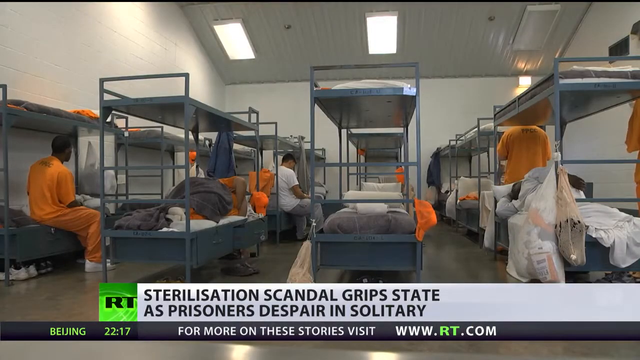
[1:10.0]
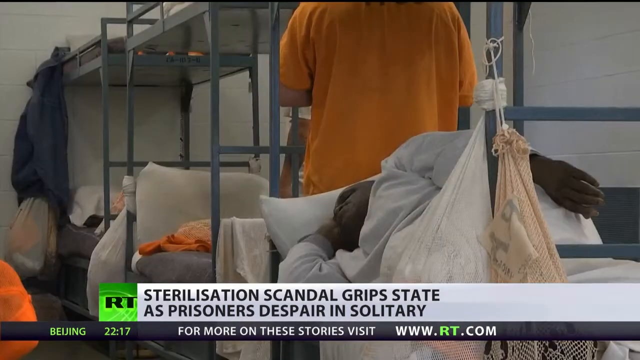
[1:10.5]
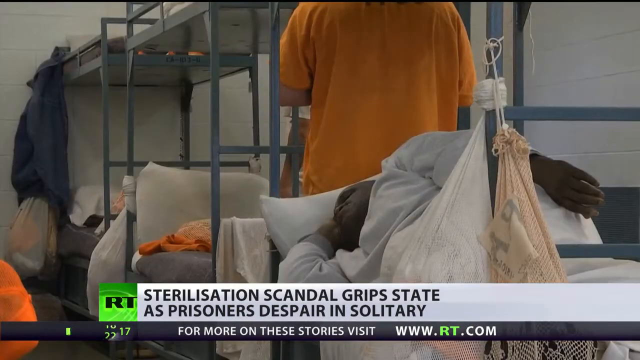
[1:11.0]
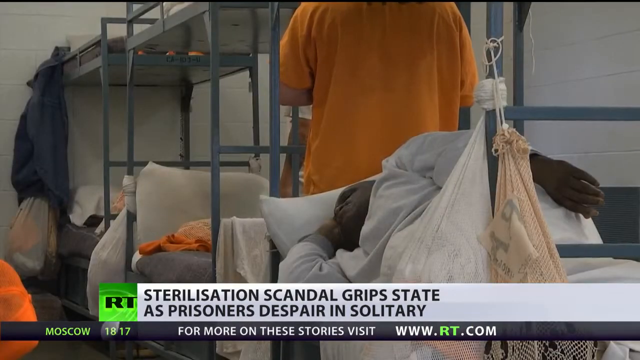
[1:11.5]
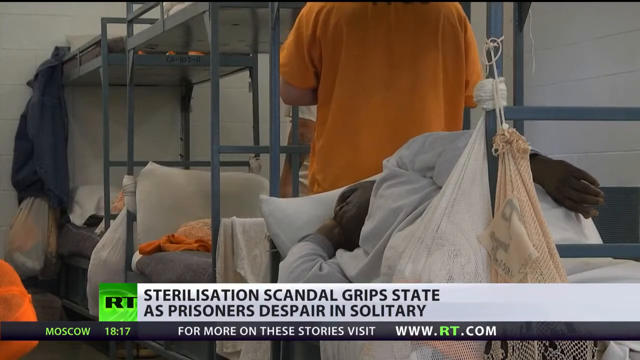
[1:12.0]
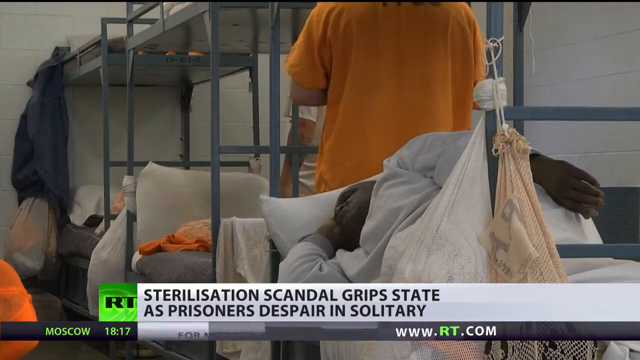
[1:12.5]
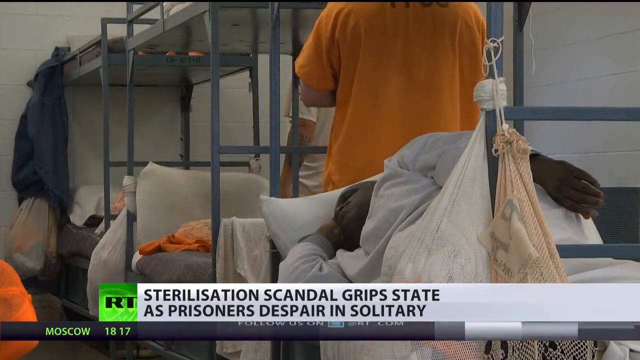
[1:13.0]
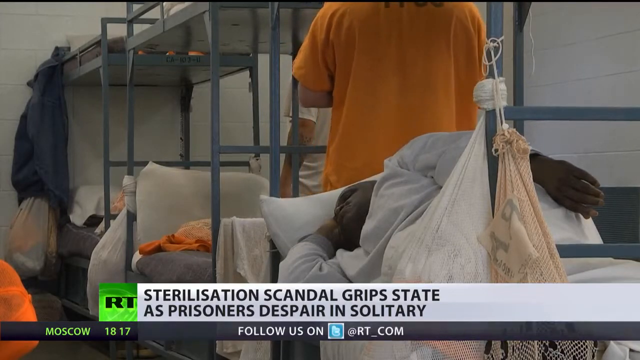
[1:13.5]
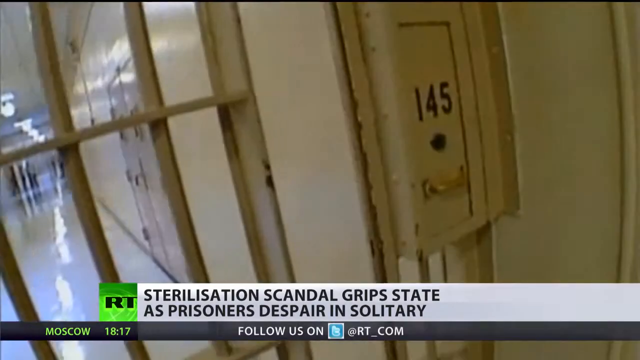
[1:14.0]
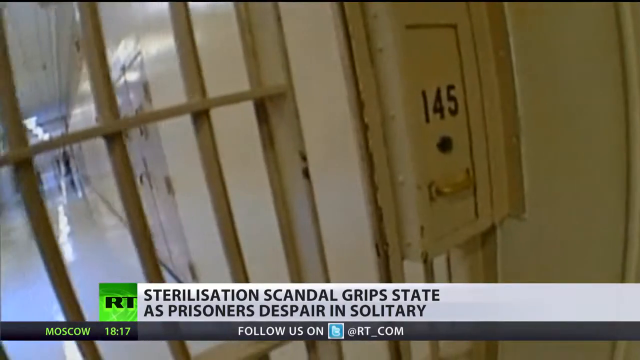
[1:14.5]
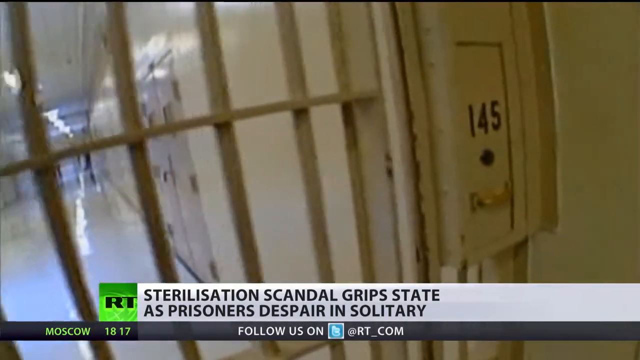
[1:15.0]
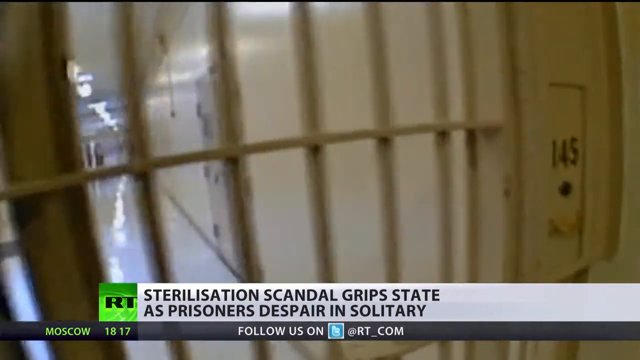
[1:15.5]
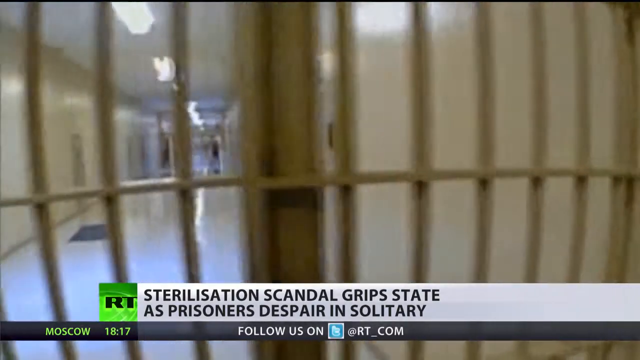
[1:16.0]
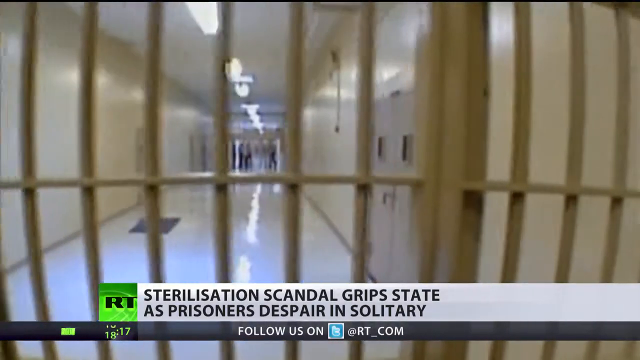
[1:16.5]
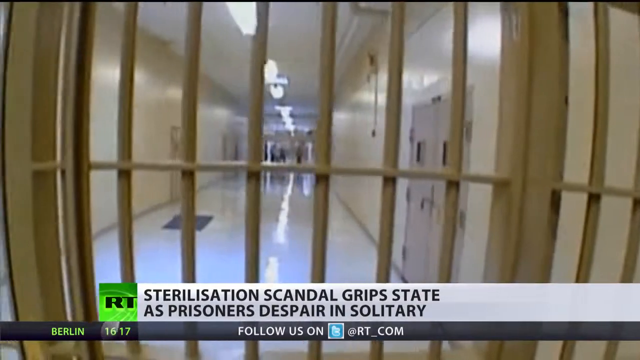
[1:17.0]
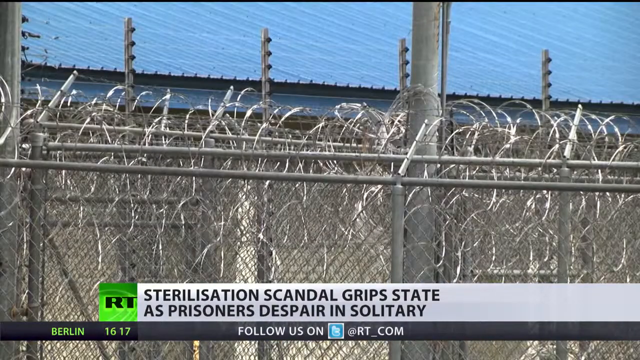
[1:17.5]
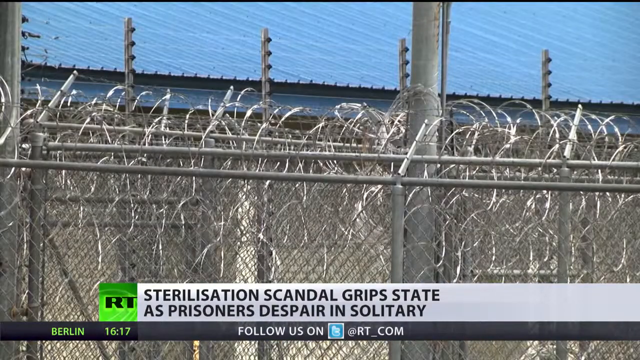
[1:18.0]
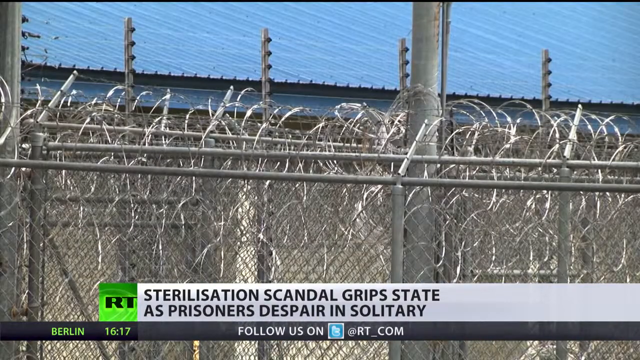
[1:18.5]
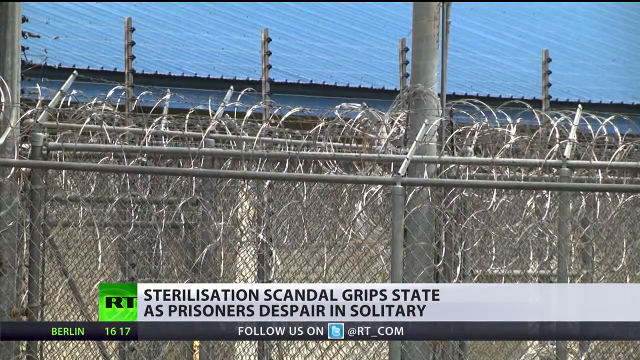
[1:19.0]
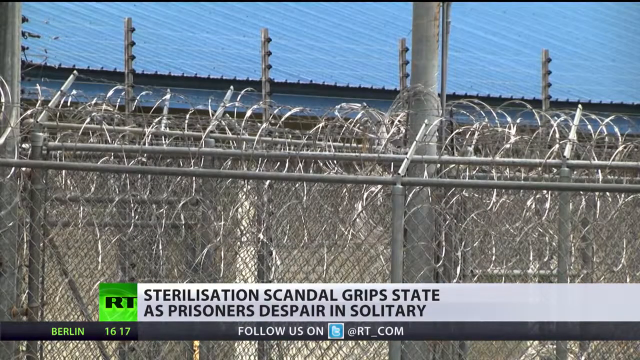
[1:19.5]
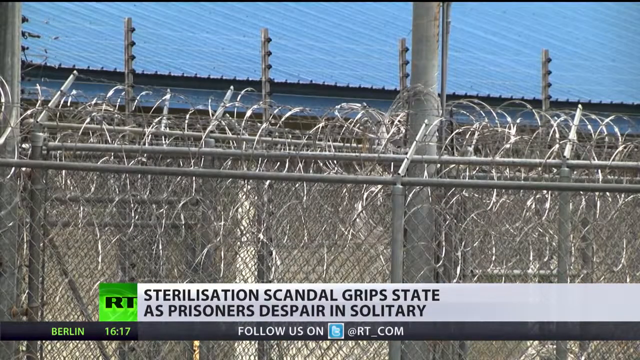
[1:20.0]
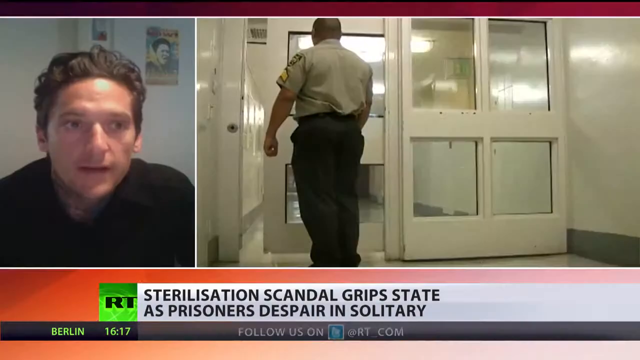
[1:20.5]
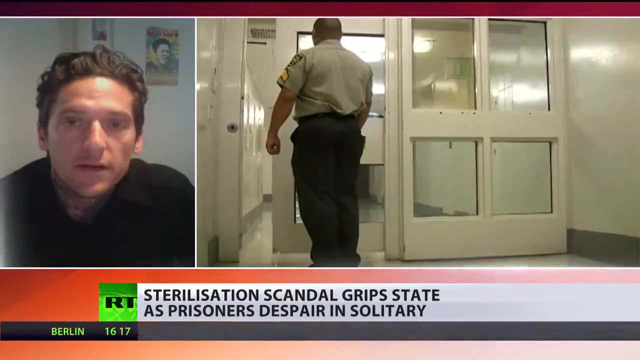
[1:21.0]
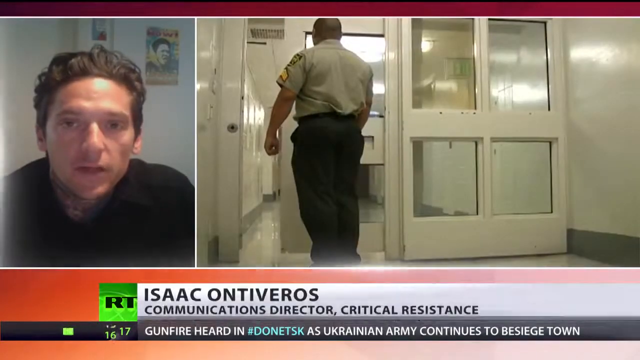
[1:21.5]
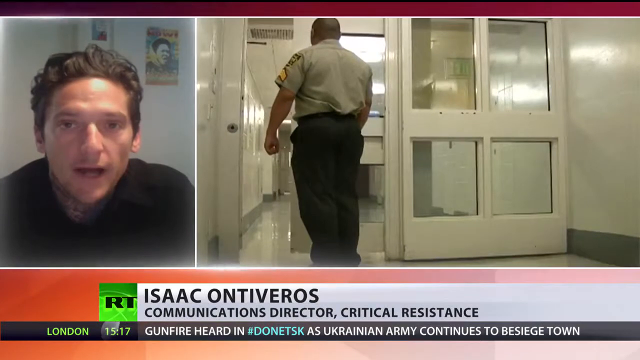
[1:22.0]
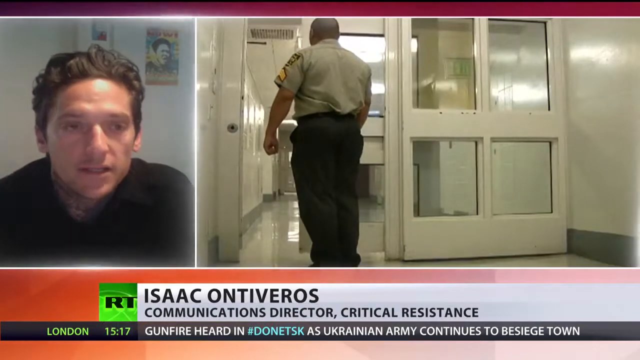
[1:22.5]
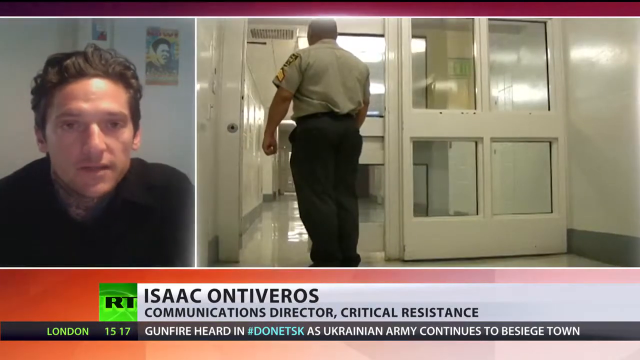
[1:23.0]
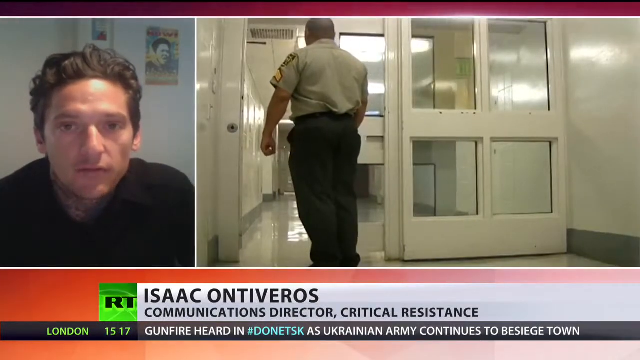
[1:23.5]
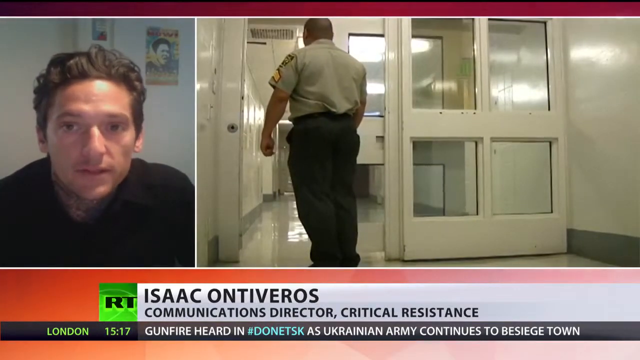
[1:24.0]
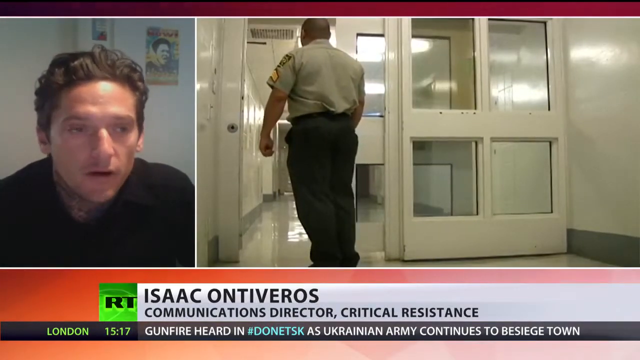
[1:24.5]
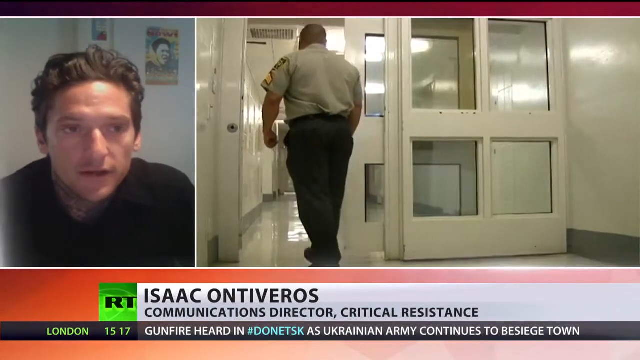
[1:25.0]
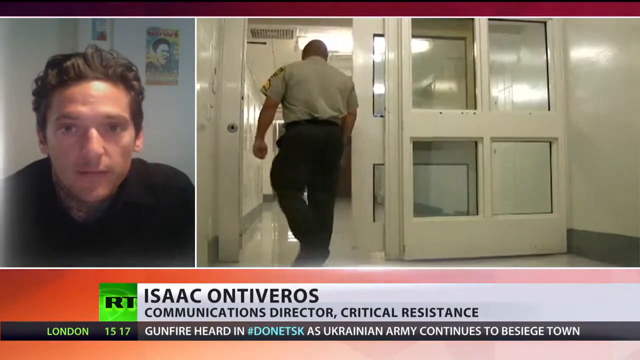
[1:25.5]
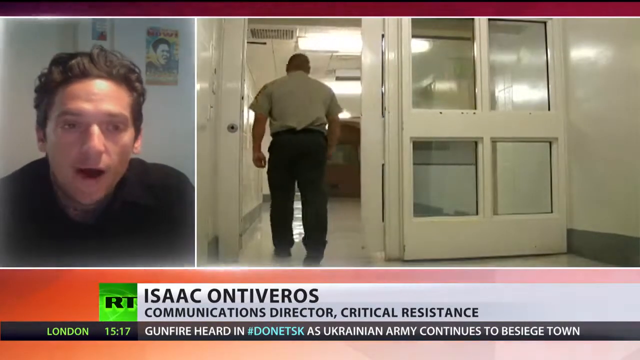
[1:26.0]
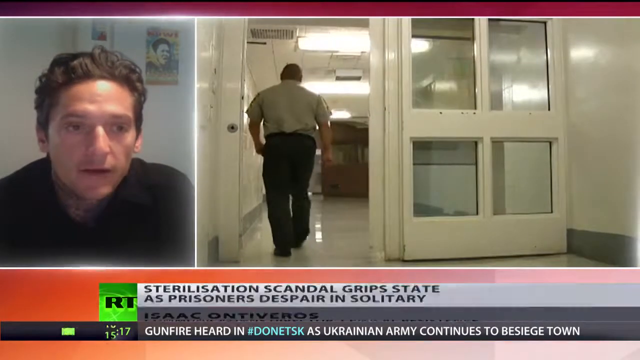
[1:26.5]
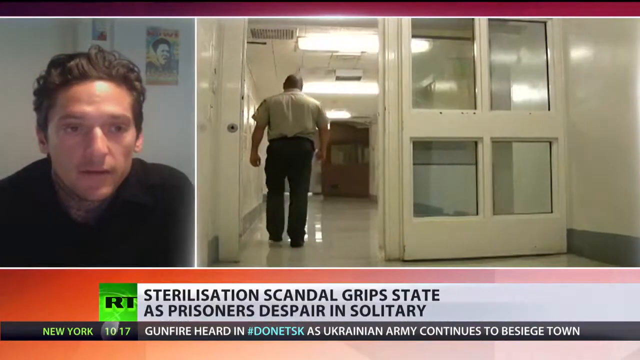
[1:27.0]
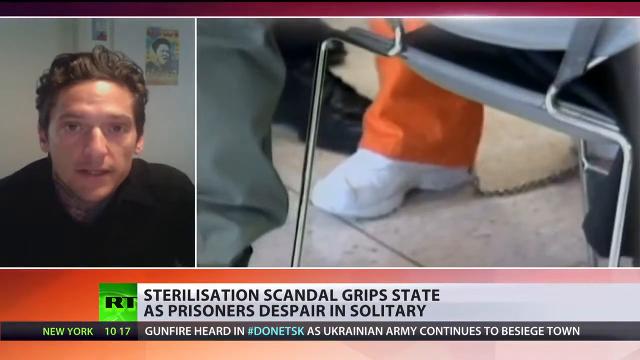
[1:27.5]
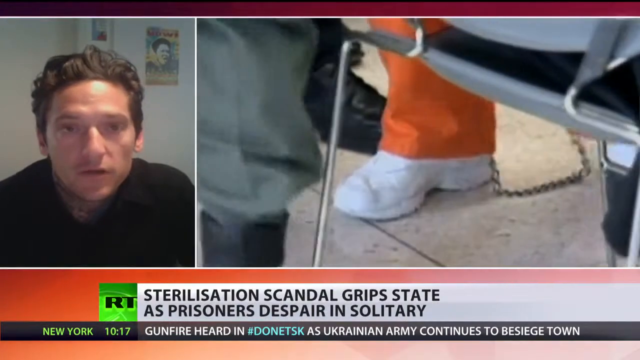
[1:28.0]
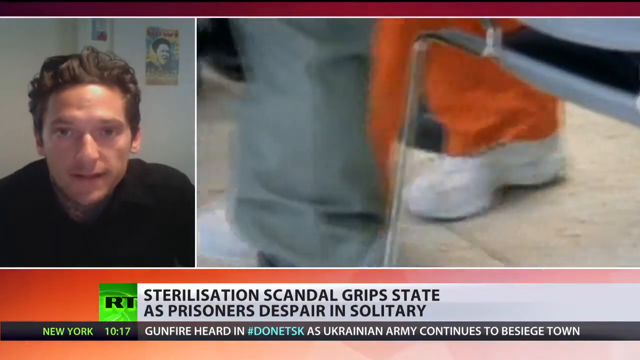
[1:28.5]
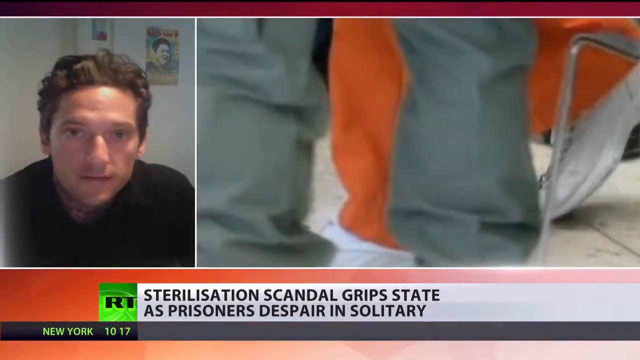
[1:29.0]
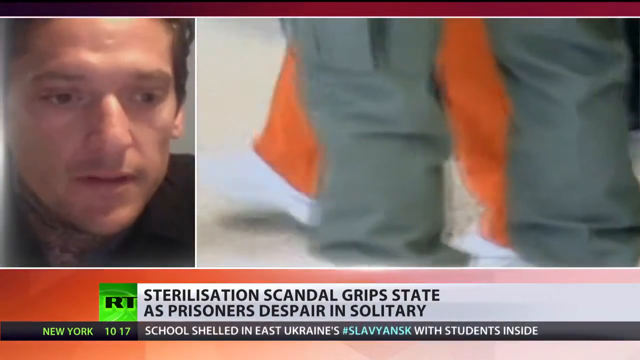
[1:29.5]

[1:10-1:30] Prisoners are in what appears to be a group cell with many beds that have gray steel frames, white pillows and white sheets. Many prisoners wear orange jumpsuits; some are lying in the beds and some are standing. The title "sterilization scandal grips state as prisoners despair in solitary" is at the bottom. The view pans to a white cell door opening, possibly to the cell block or the group cell, then pans out to a new scene of the steel barbed wire fence outside. It then moves to a prison guard opening a sliding door, while someone appears to be giving testimony on the left-hand side. A name pops up at the bottom: "Isaac Antiveros, Communications Director, Critical Resistance". The guard walks through the sliding door after it opens. Another scene shows a prisoner's feet chained together, in white shoes and orange pants, as a guard directs them away.